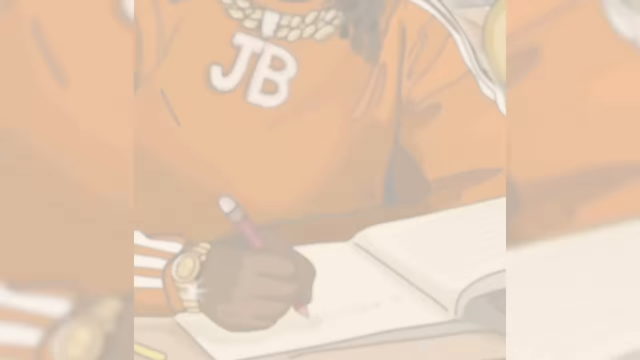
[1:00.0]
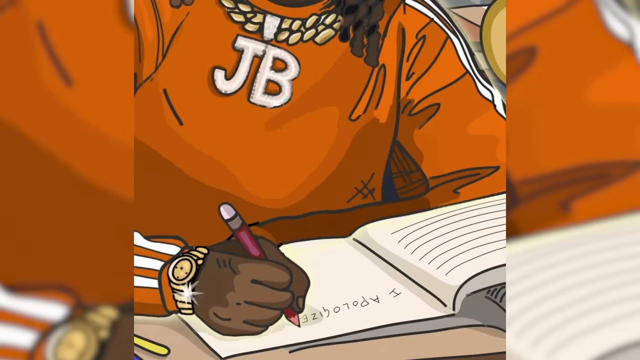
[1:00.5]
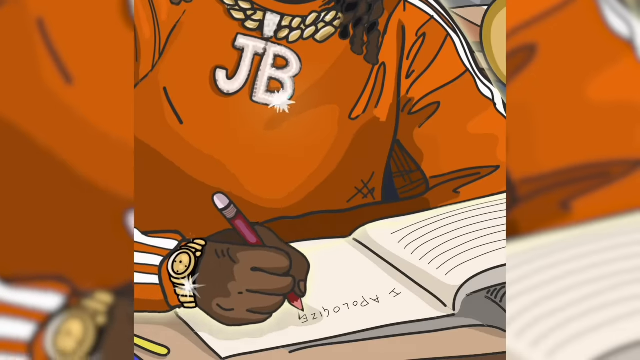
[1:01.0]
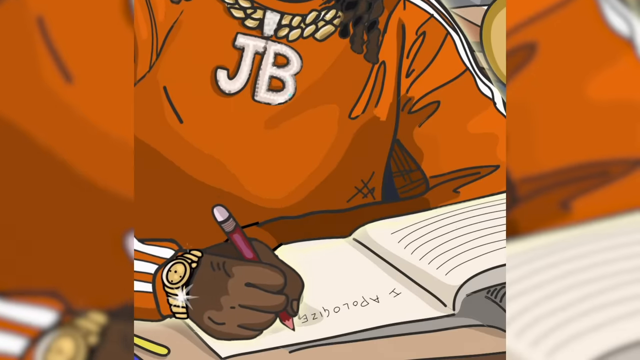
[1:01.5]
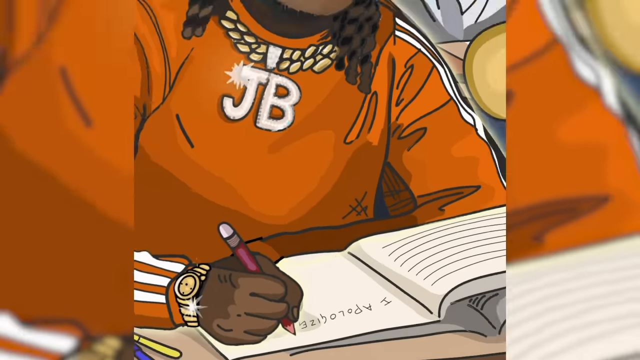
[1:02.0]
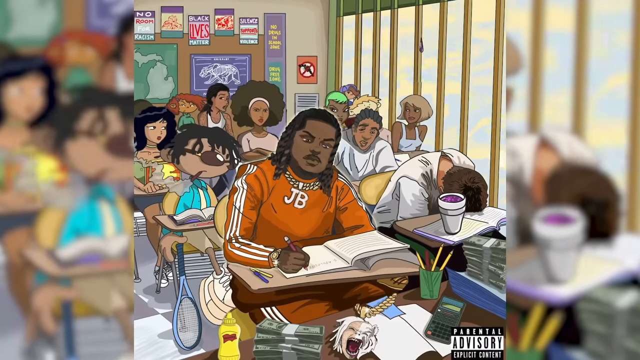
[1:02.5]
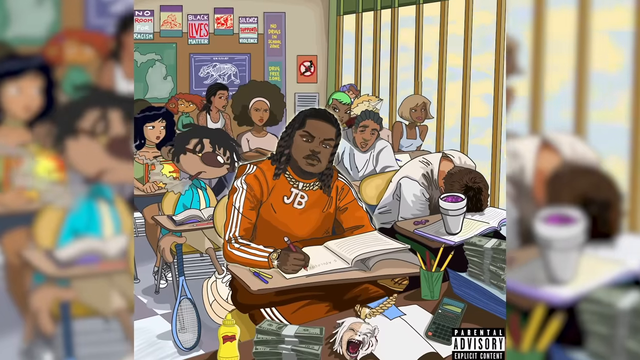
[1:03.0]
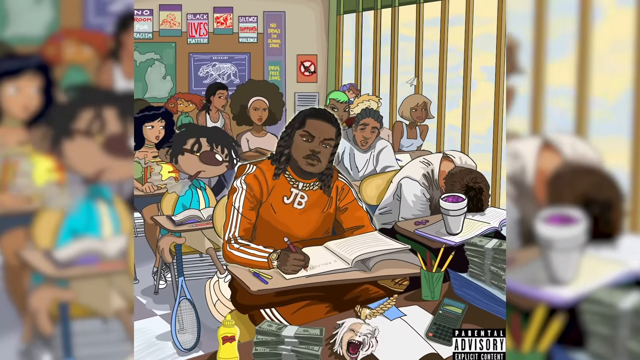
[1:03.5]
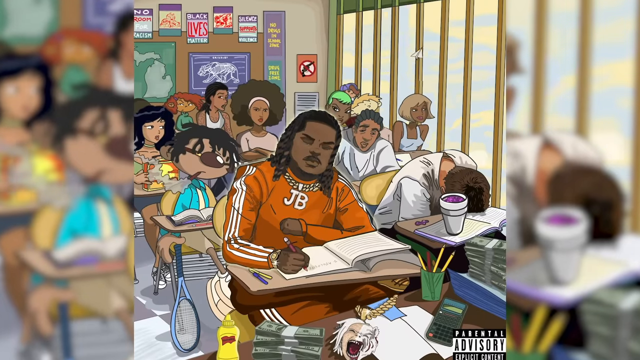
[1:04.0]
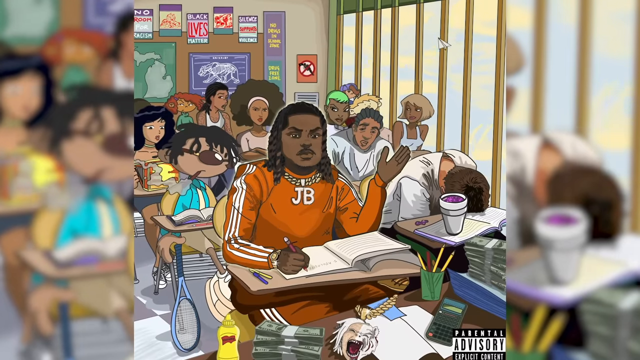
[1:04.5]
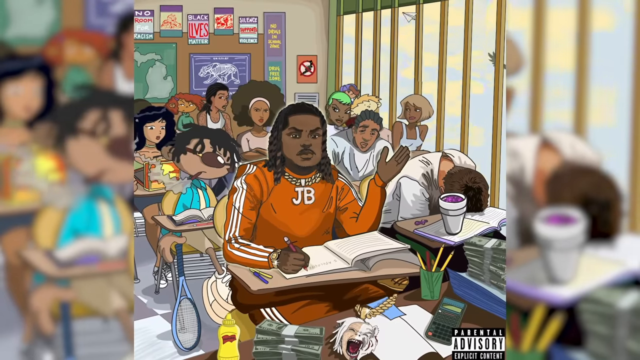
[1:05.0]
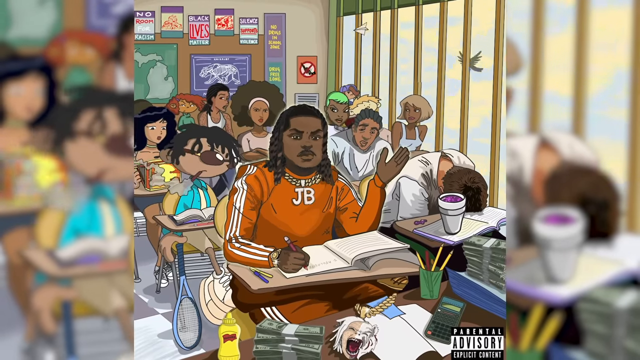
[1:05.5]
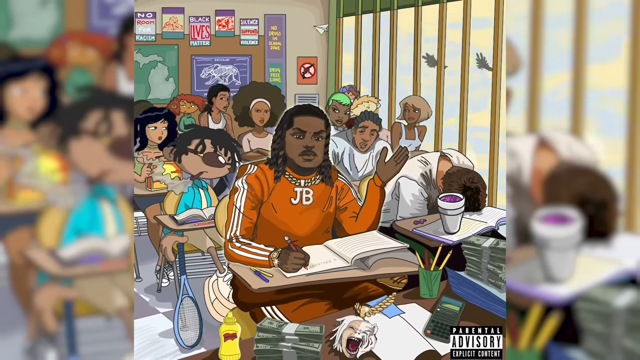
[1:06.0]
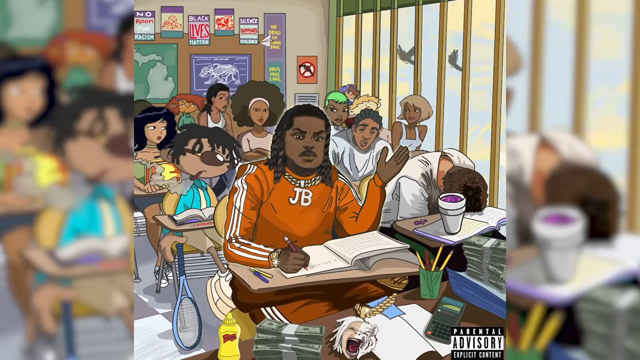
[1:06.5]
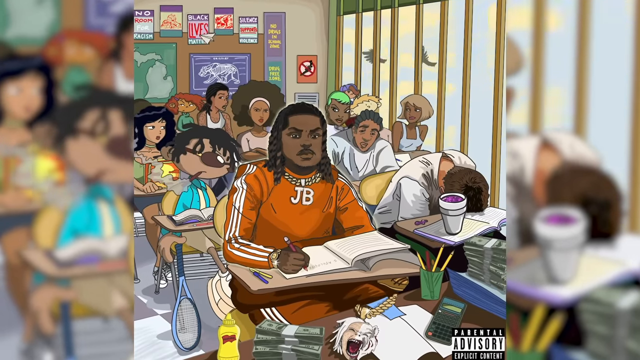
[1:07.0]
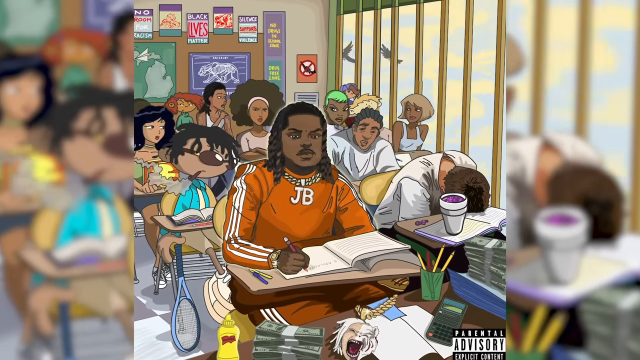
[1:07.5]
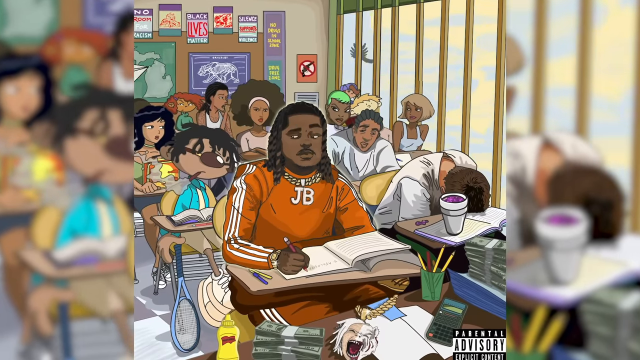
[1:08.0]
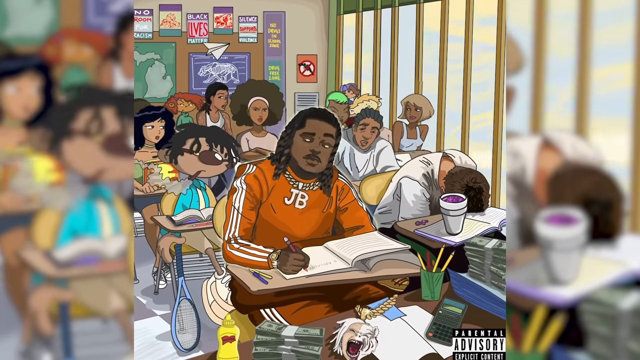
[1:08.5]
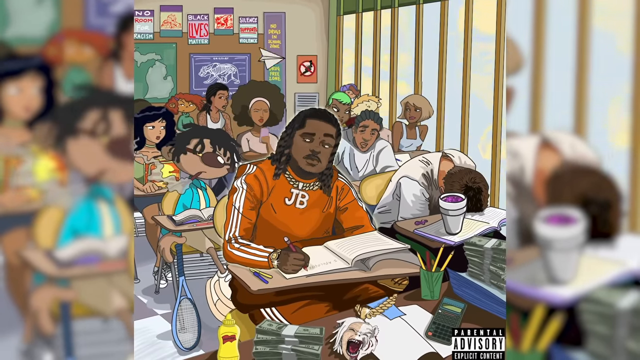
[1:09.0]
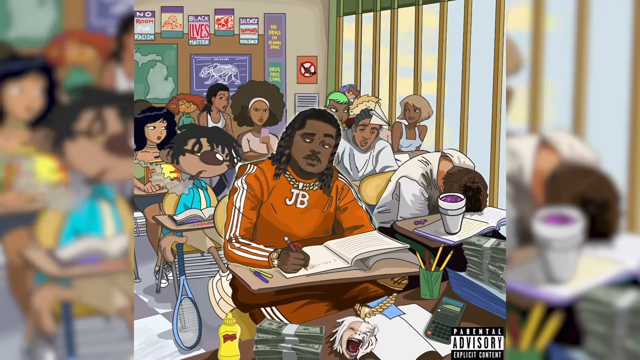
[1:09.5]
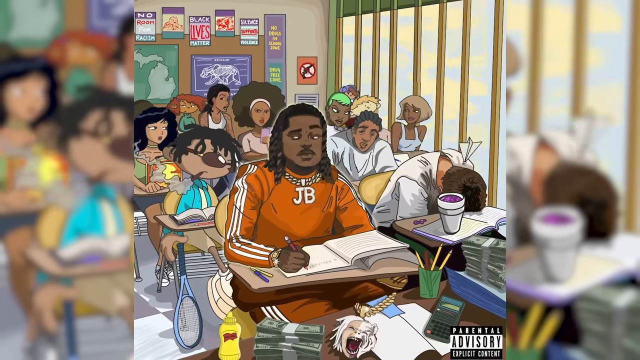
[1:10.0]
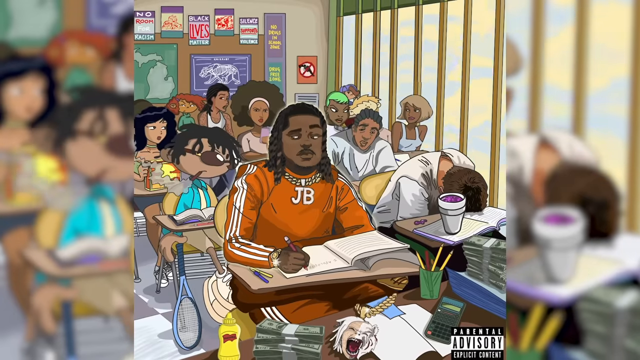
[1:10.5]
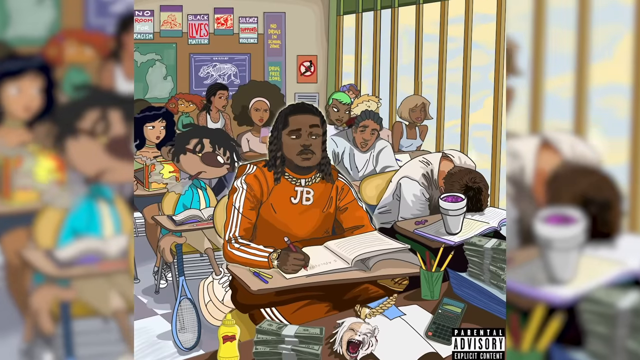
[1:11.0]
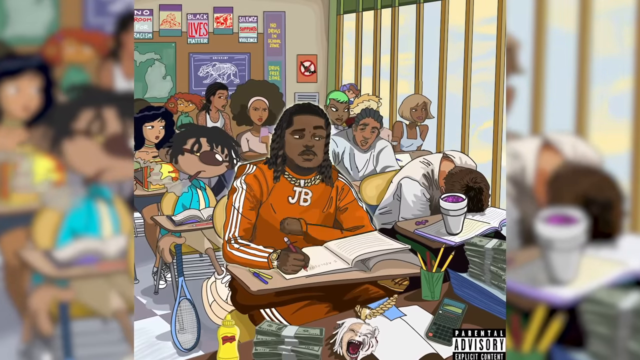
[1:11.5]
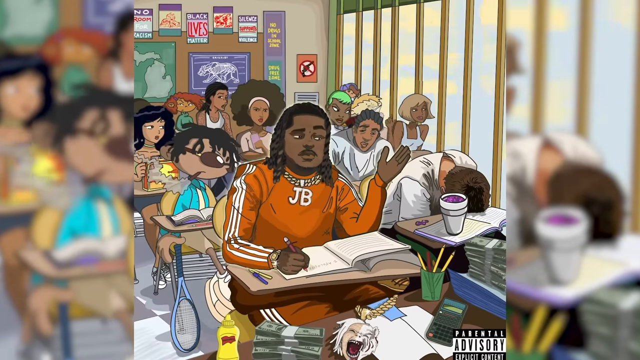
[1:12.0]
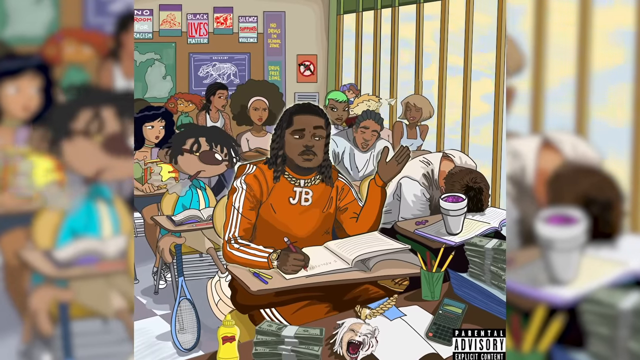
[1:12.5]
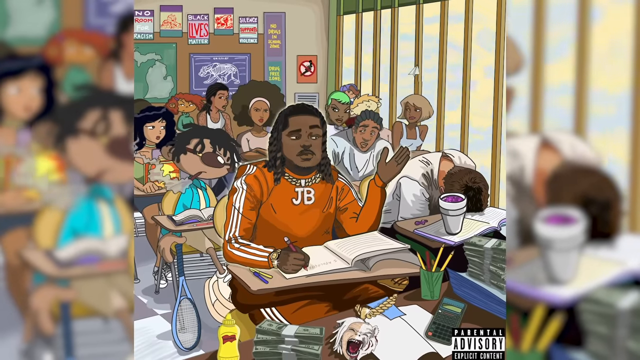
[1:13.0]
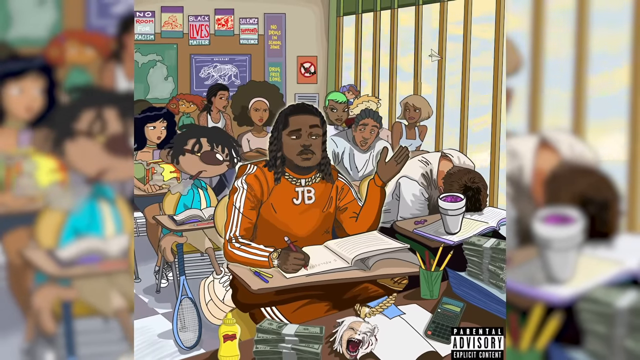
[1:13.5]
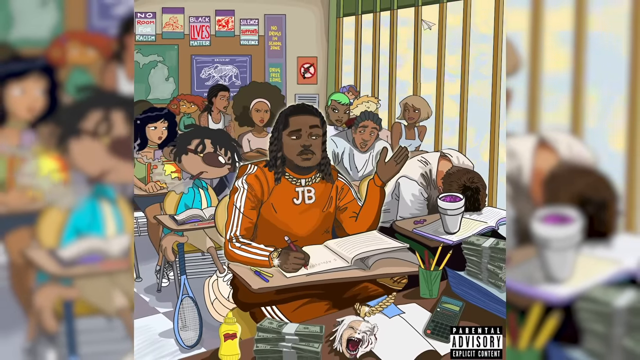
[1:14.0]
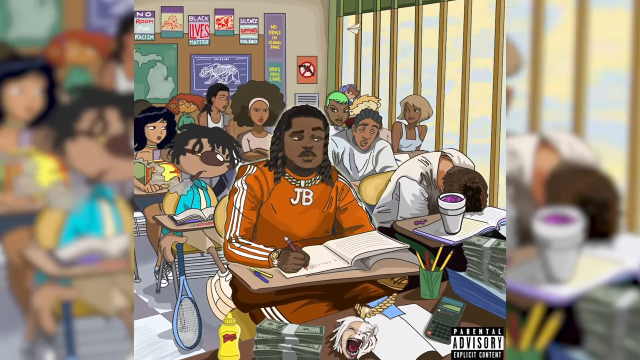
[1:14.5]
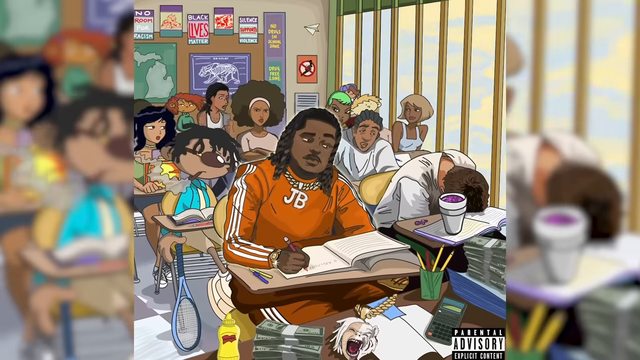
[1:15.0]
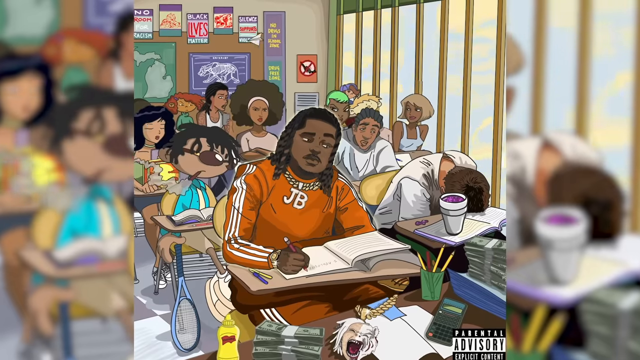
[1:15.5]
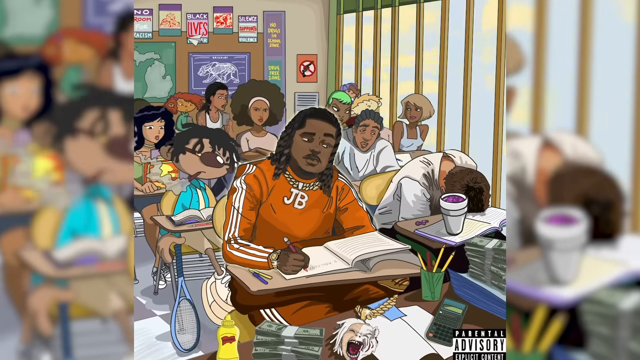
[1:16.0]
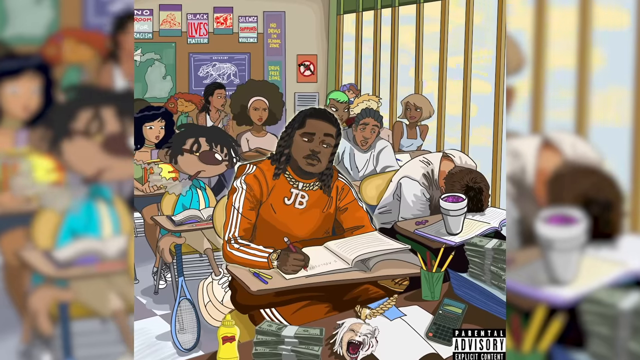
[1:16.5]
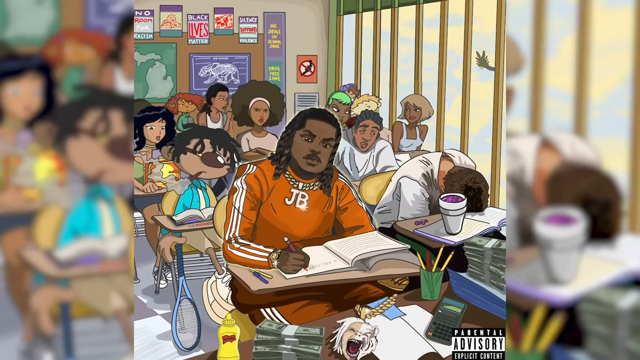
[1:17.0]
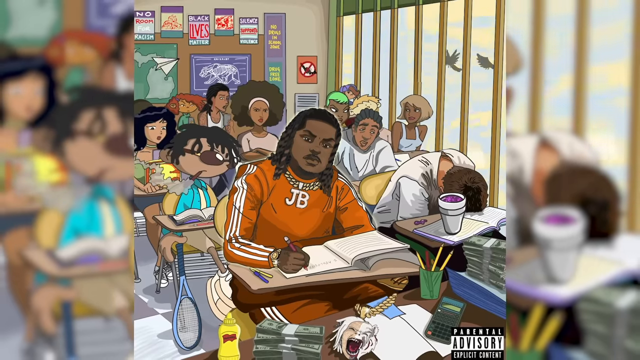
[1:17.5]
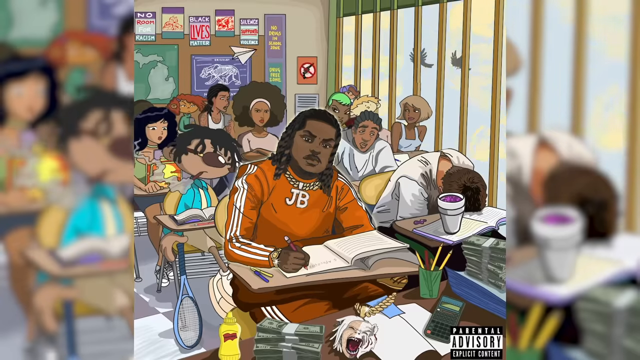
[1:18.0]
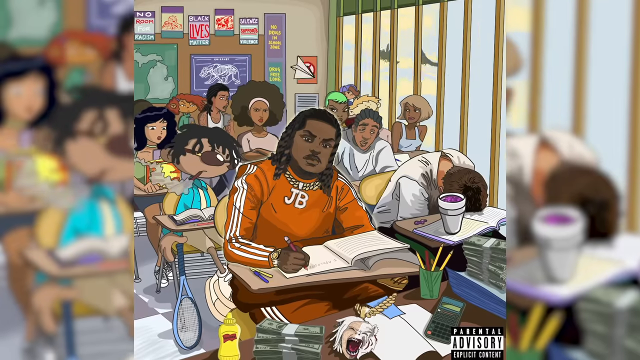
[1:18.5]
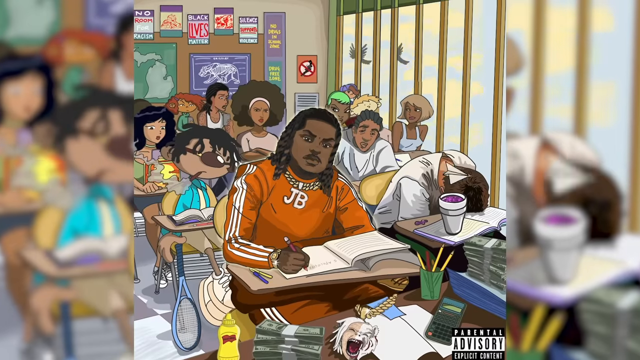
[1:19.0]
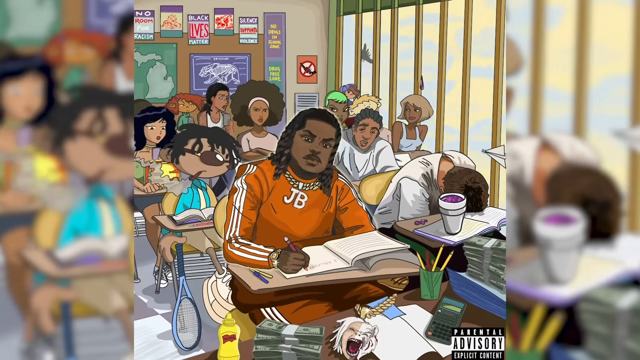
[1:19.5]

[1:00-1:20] On his desk are two other pens, a yellow one and a purple one, and he appears to be writing with a pencil that has a red eraser on the end. The camera zooms in on him and out again as he writes "I apologize" in capital letters. The scene stays the same: paper airplanes fly around the room and doves fly outside, while the kids sit there zoned out with the same motions and facial expressions. He looks around left and right, puts his hand up for a moment and brings it back down, repeating this a couple of times. His orange and white outfit is fully visible, with a stripe running down the sleeve and down the hips and pants, apparently the Adidas style of stripes.